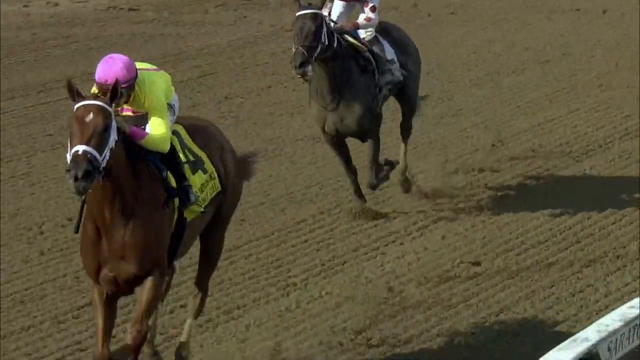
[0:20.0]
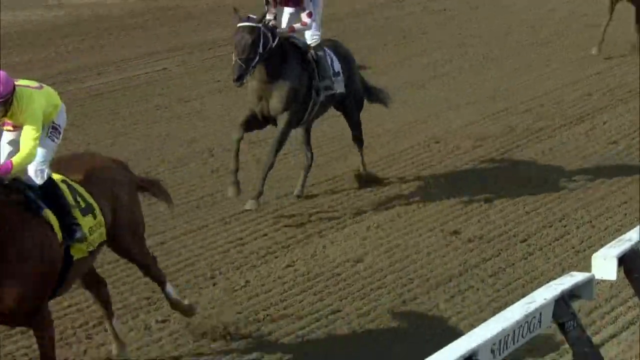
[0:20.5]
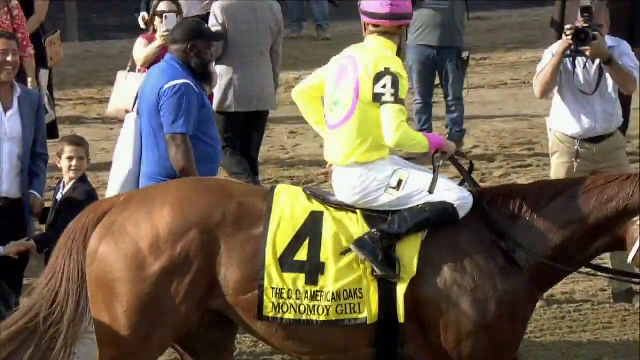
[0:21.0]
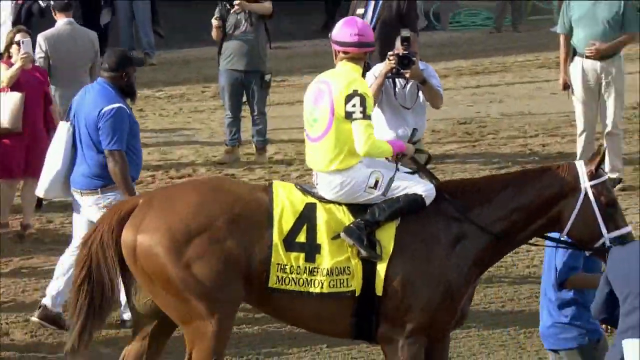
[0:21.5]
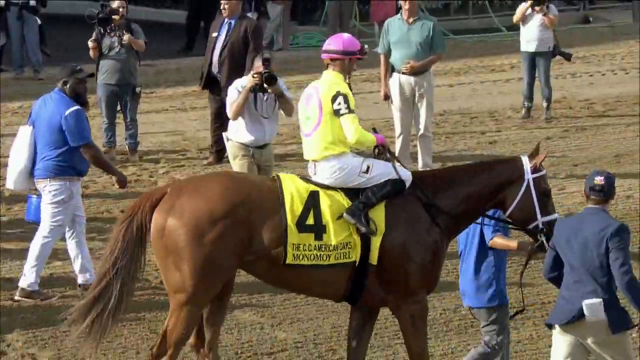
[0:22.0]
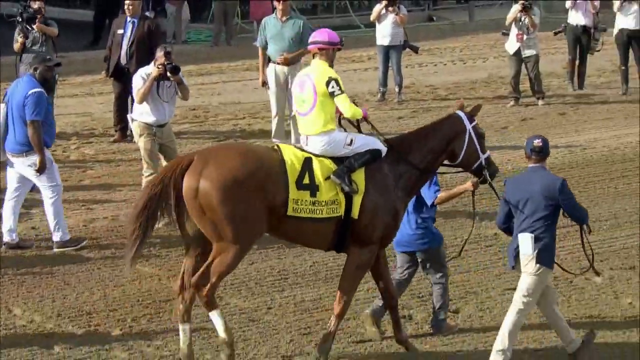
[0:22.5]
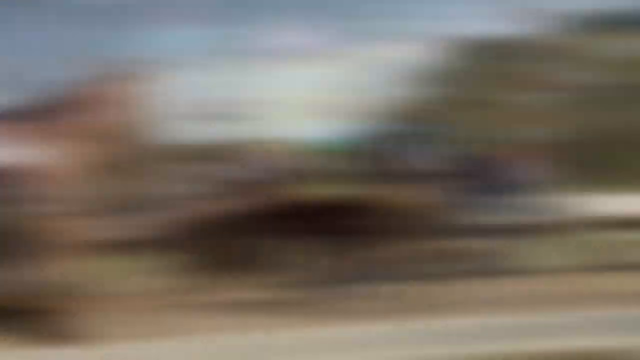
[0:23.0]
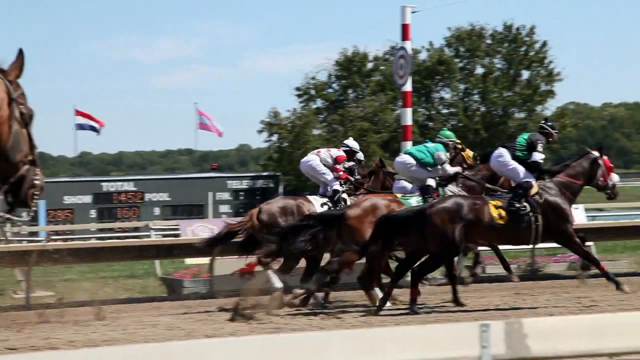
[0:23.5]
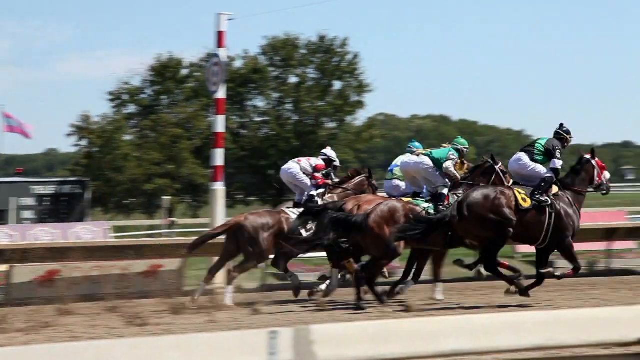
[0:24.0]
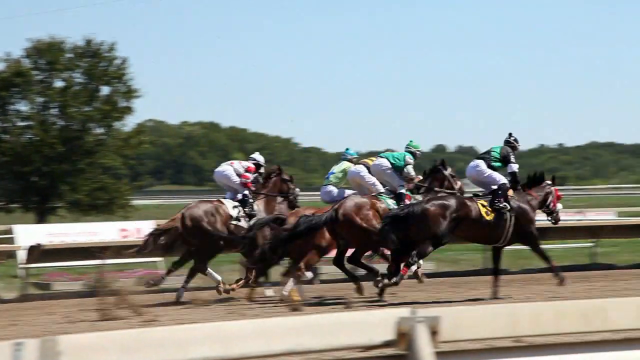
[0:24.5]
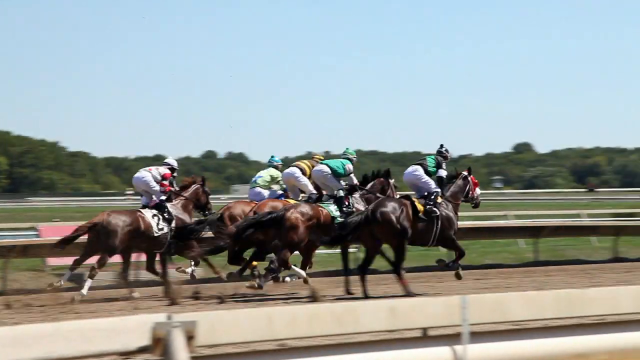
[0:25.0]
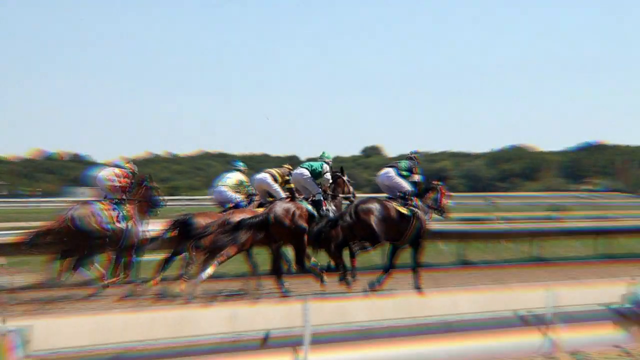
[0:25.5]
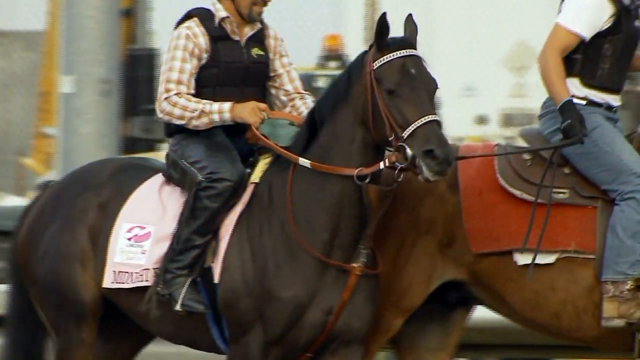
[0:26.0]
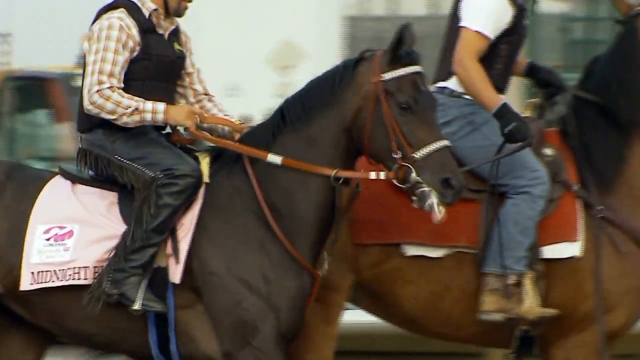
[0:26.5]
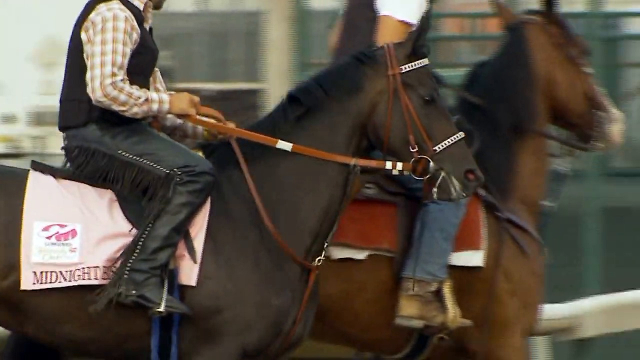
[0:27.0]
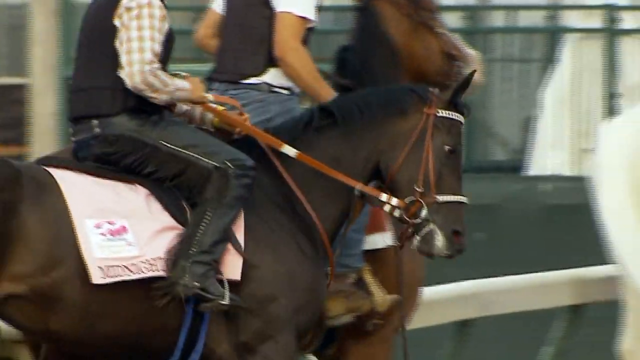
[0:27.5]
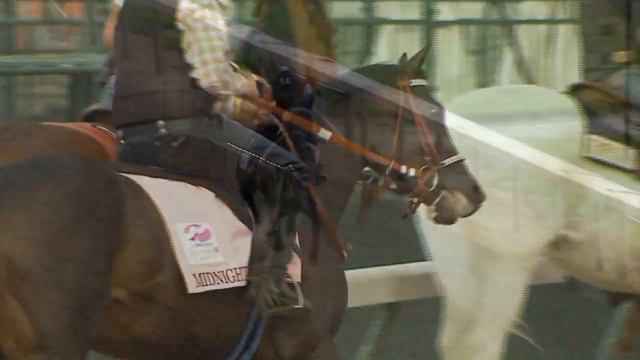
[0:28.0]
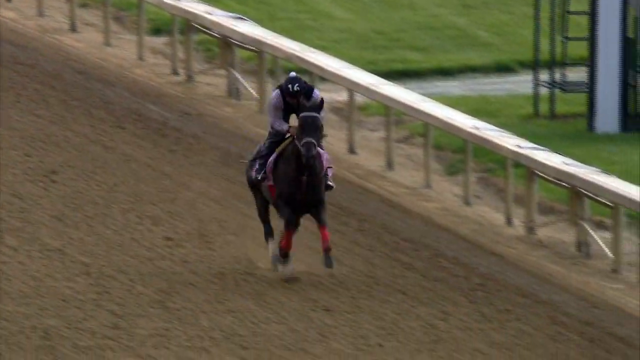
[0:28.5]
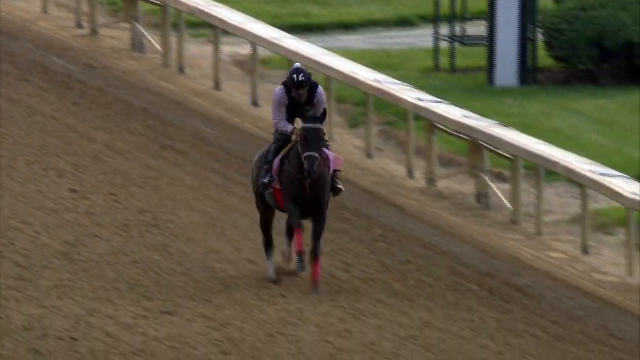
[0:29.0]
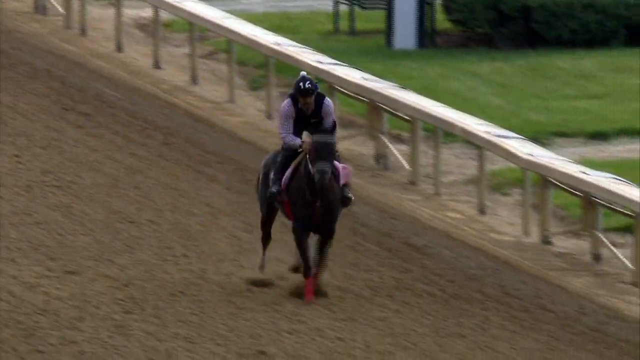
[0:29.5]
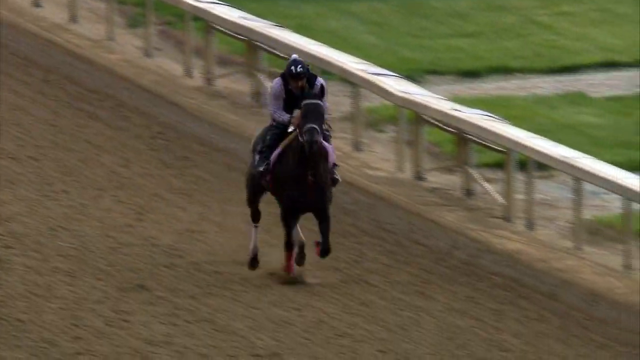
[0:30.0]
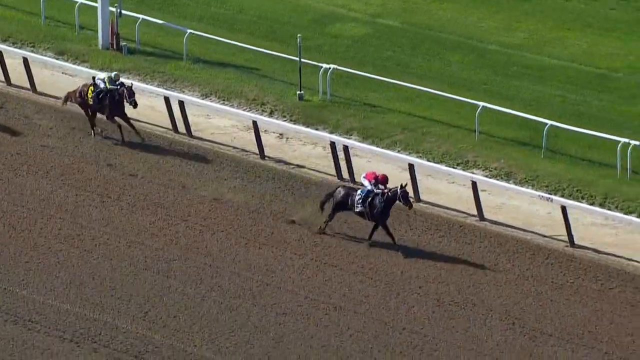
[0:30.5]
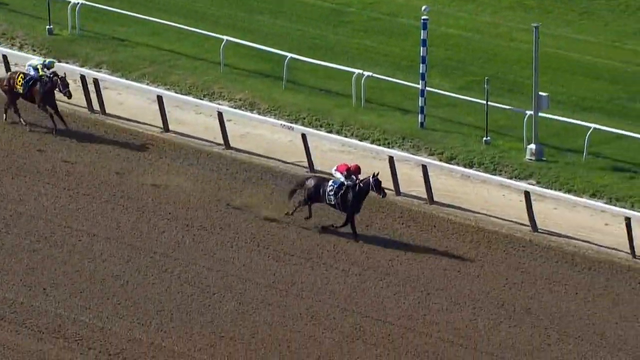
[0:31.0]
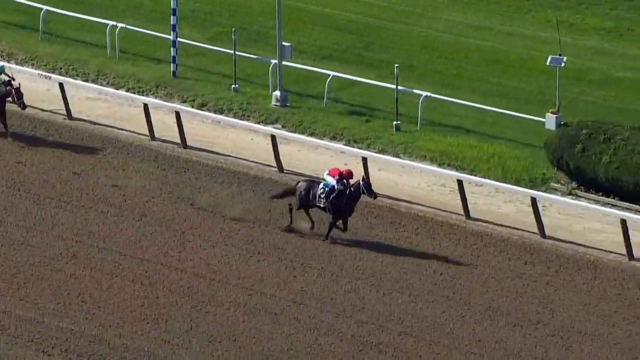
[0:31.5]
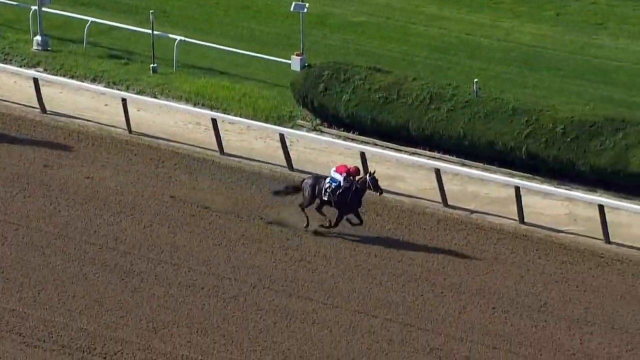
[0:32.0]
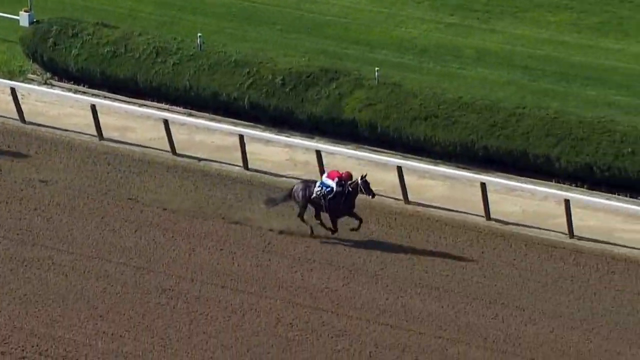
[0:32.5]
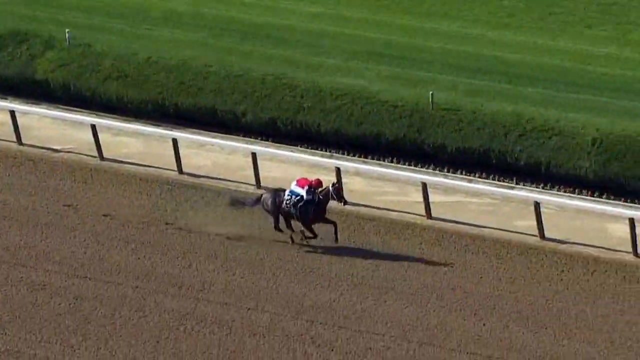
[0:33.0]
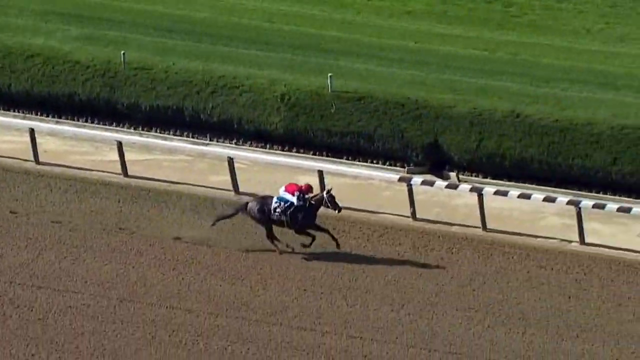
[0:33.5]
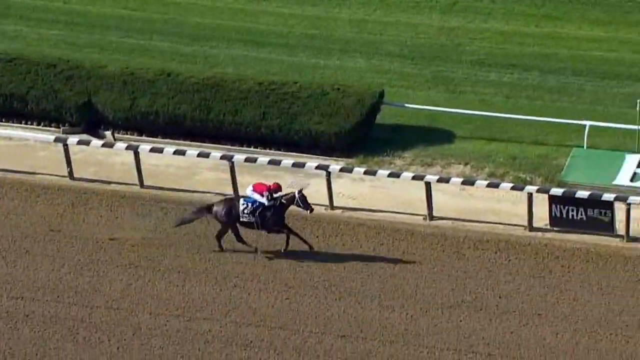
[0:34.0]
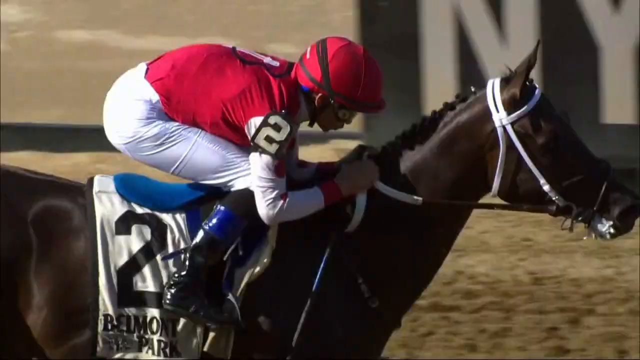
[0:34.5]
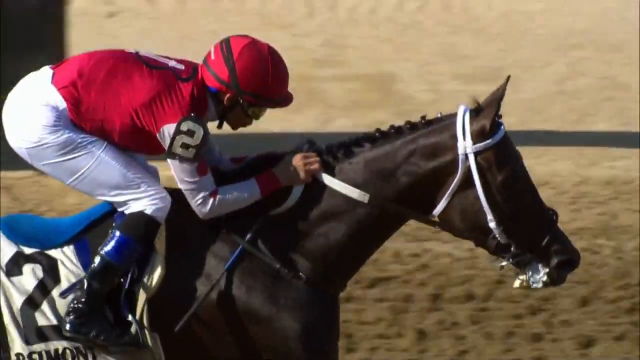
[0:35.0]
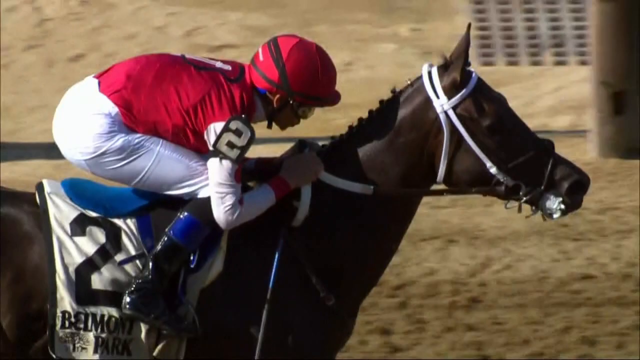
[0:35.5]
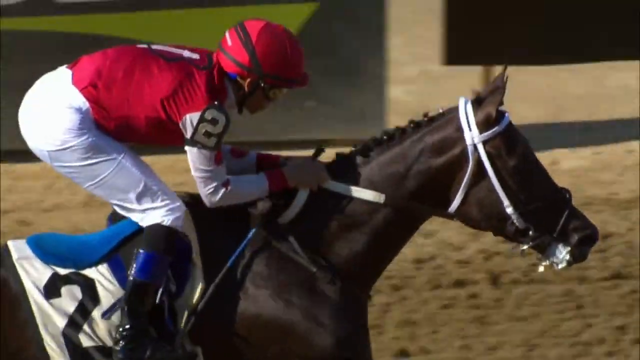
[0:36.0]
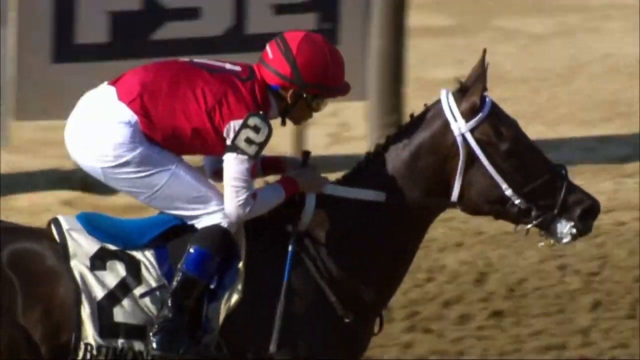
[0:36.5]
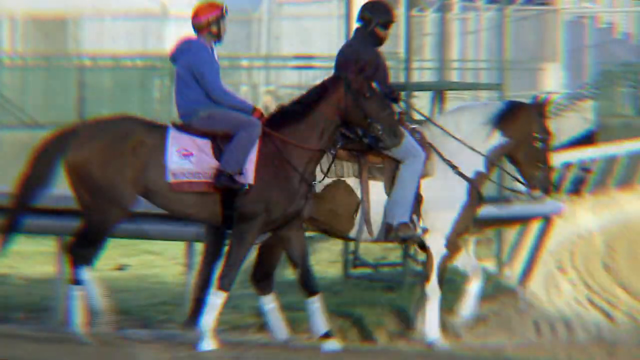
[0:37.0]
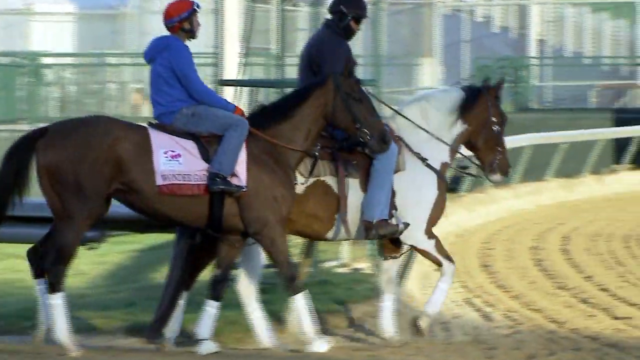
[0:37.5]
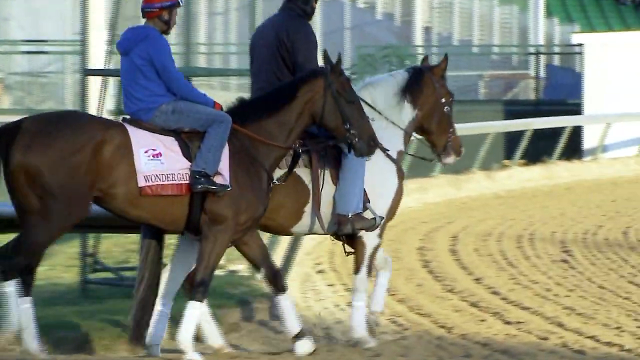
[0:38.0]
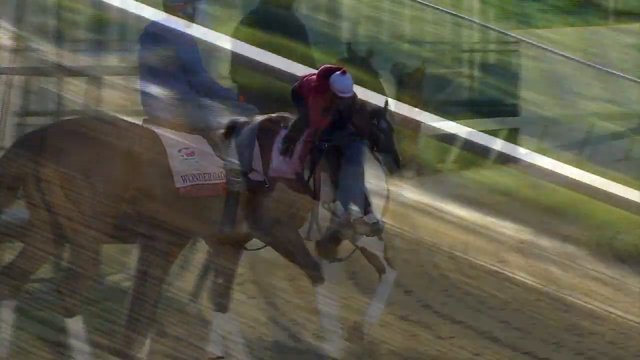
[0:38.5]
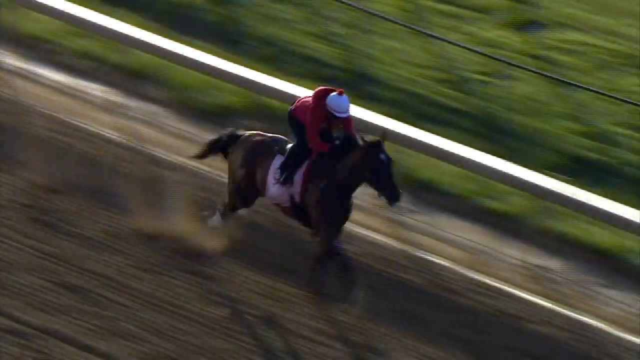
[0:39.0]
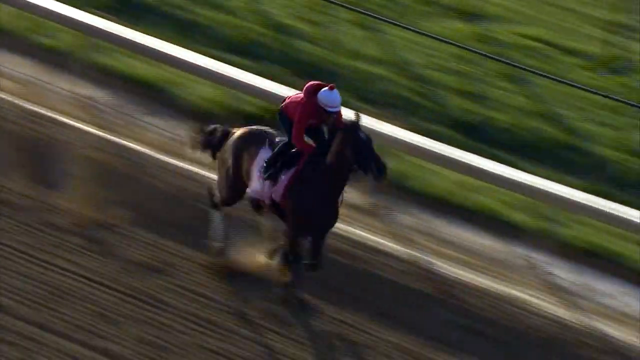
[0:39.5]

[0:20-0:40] Two horses appear to be racing each other. The video then quickly shows a racehorse with a yellow number four wrapped on top of him underneath the saddle. The jockey sat on this horse wears a yellow top with the number four on his right arm, a pink horse riding hat, white jodhpurs and black boots. This man is led away by somebody else. The video then cuts to three of the horses racing each other, followed by a man on a horse who appears to be leading the horse somewhere within the racing field. The video then returns to the earlier scene of the jockey riding the horse. Many different horse riders and their horses are shown at this horse racing event.